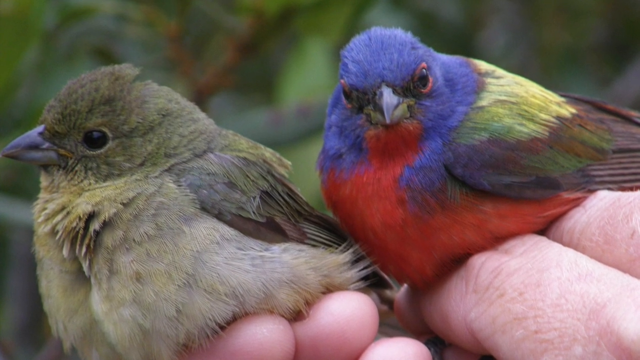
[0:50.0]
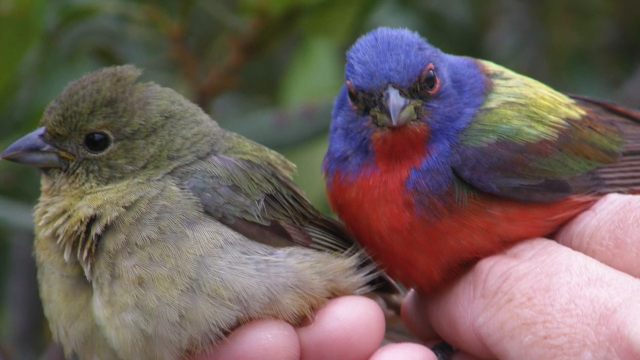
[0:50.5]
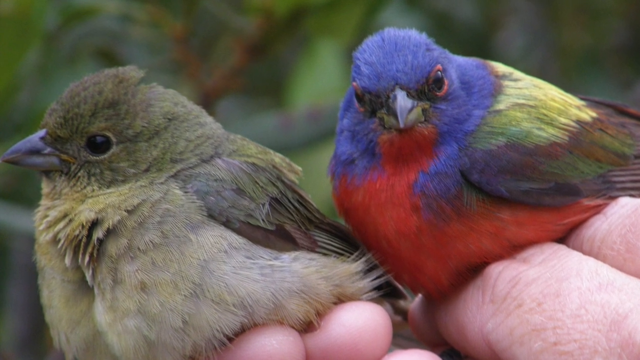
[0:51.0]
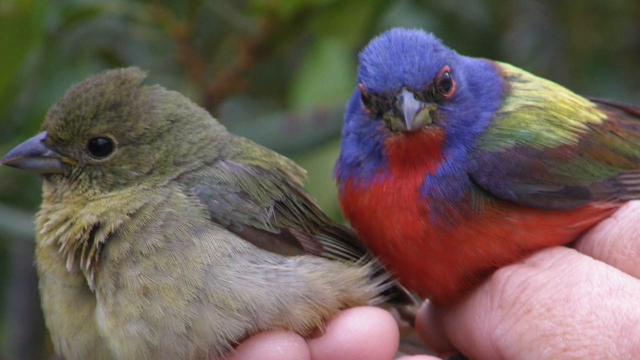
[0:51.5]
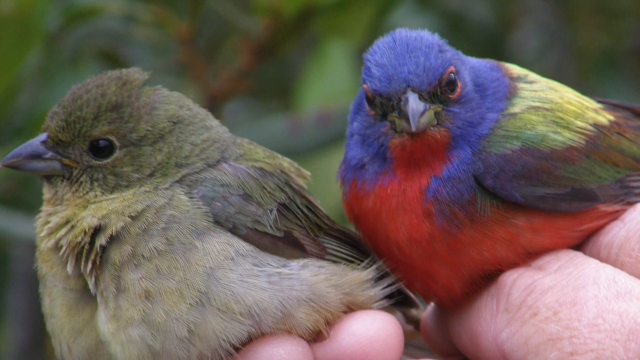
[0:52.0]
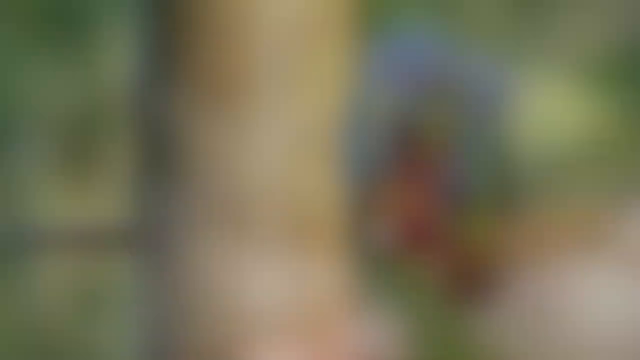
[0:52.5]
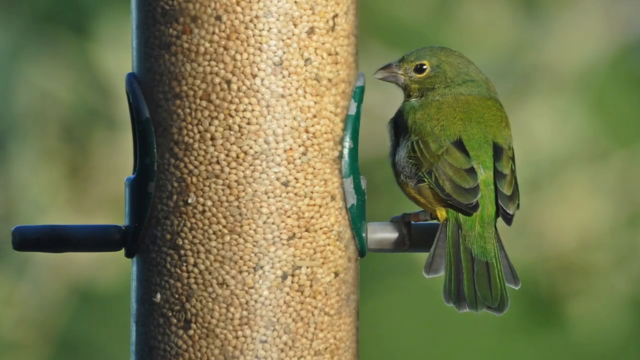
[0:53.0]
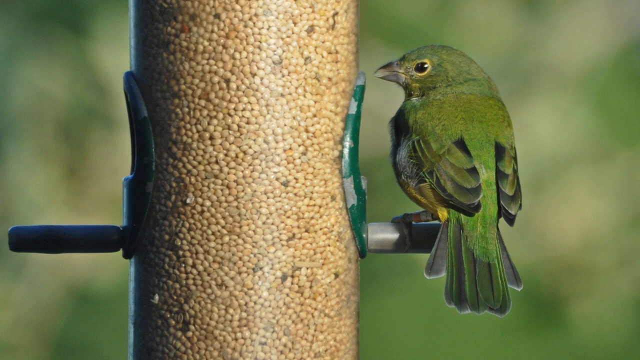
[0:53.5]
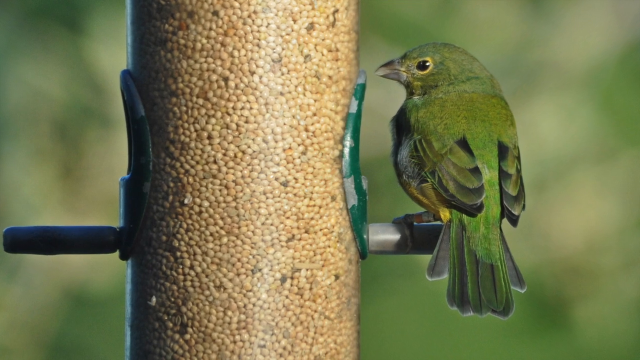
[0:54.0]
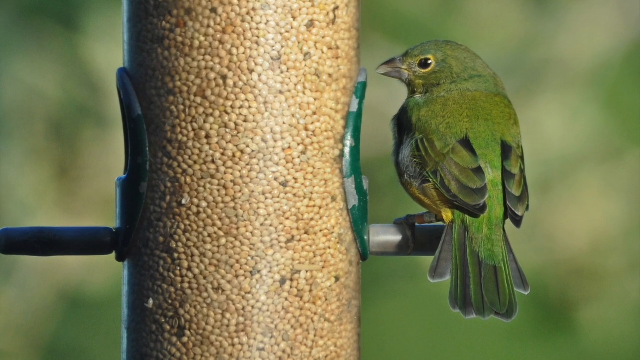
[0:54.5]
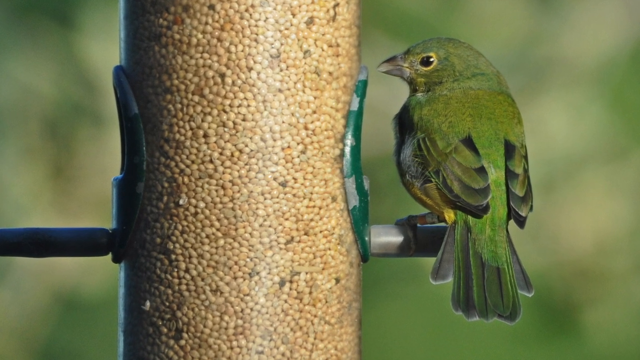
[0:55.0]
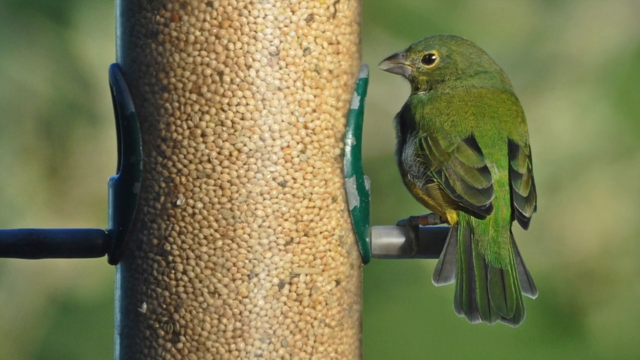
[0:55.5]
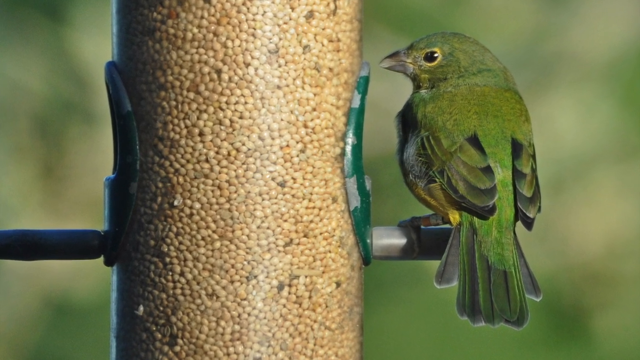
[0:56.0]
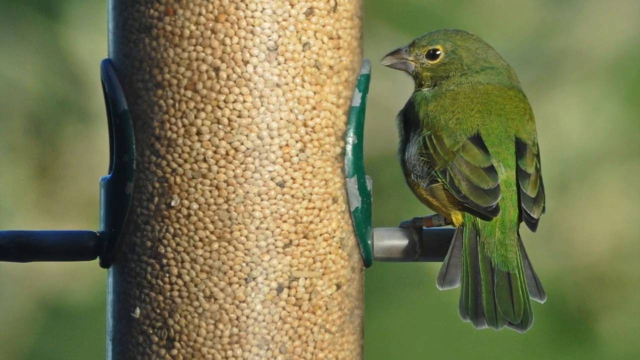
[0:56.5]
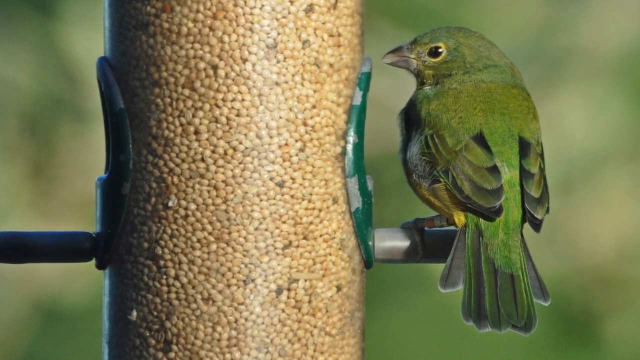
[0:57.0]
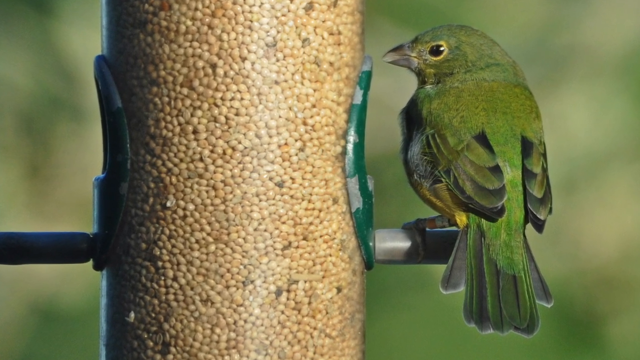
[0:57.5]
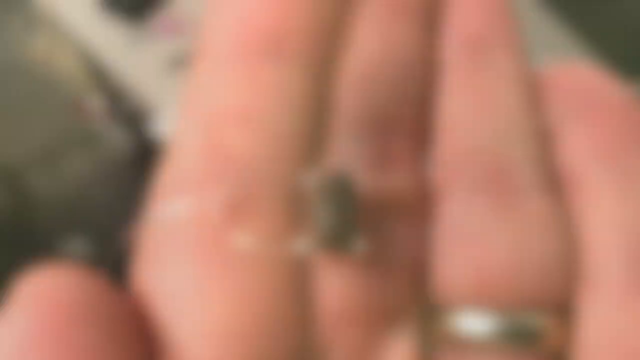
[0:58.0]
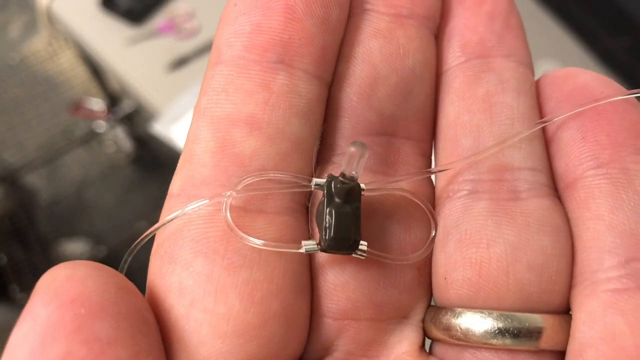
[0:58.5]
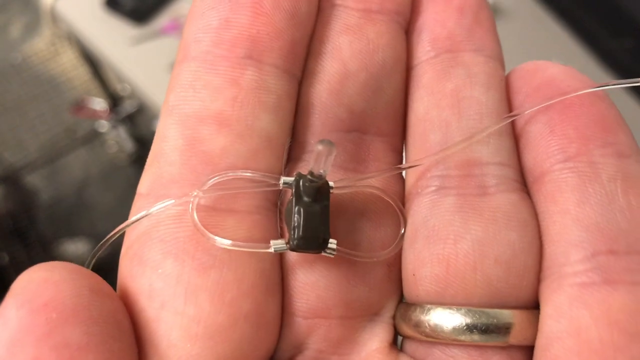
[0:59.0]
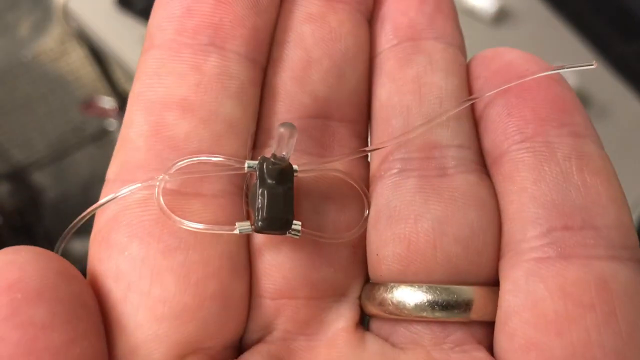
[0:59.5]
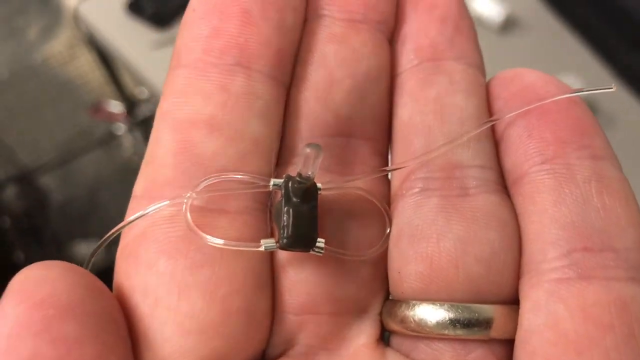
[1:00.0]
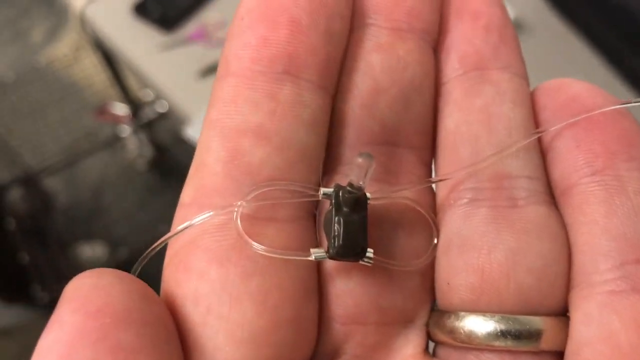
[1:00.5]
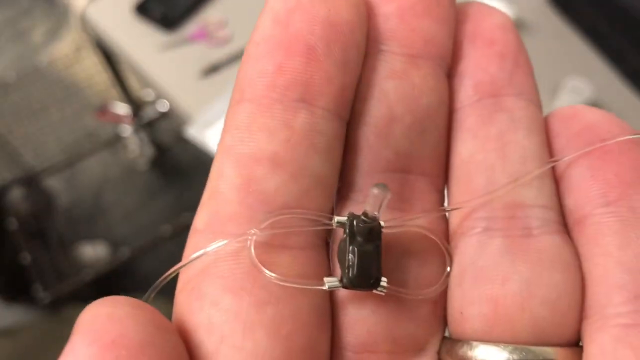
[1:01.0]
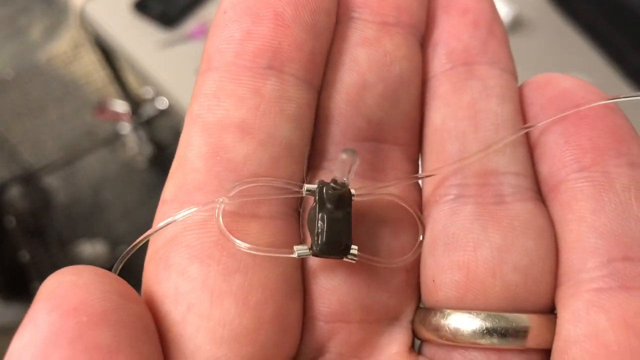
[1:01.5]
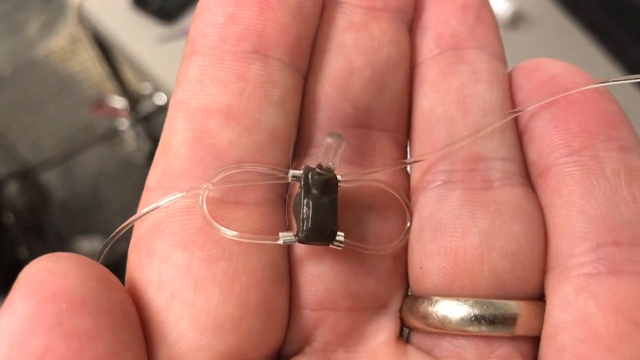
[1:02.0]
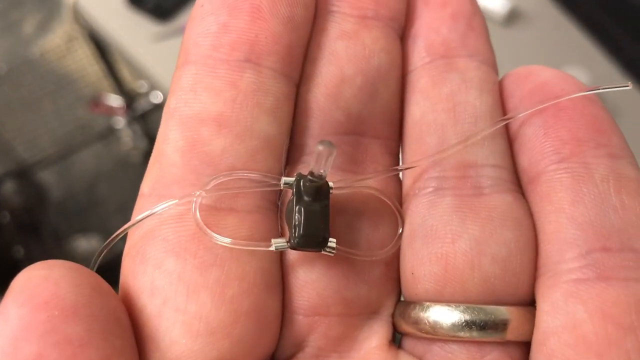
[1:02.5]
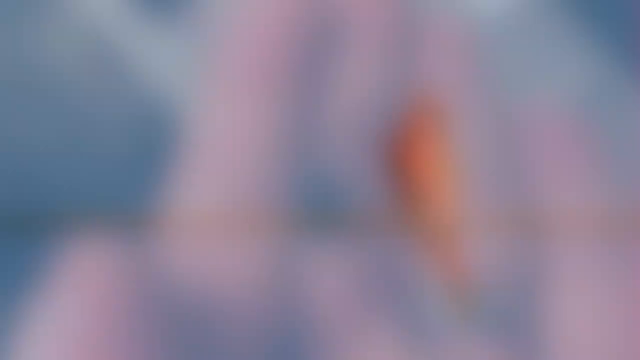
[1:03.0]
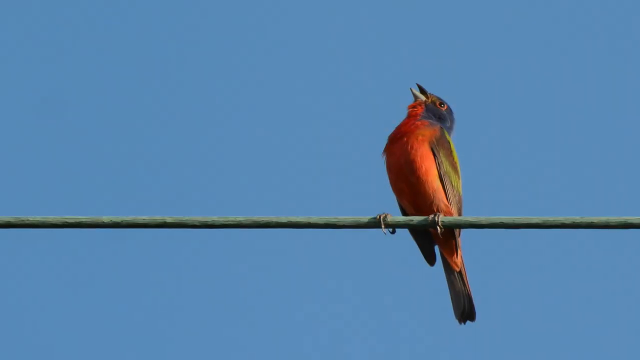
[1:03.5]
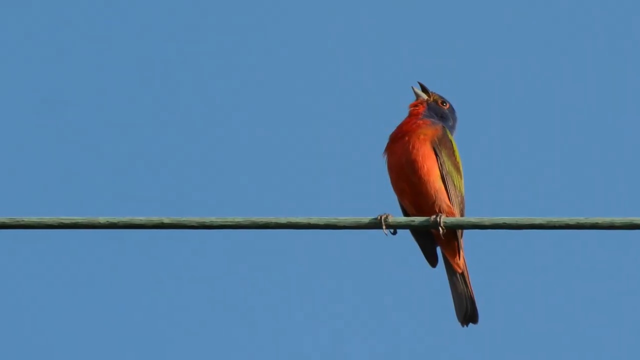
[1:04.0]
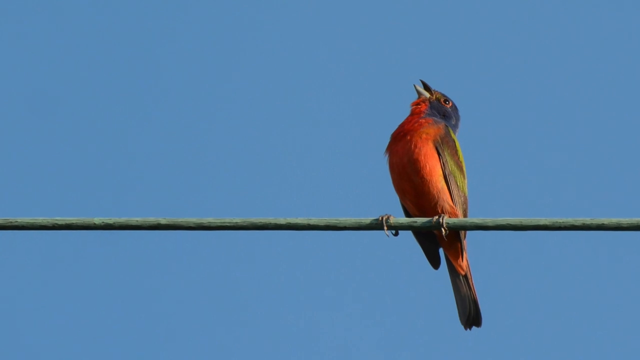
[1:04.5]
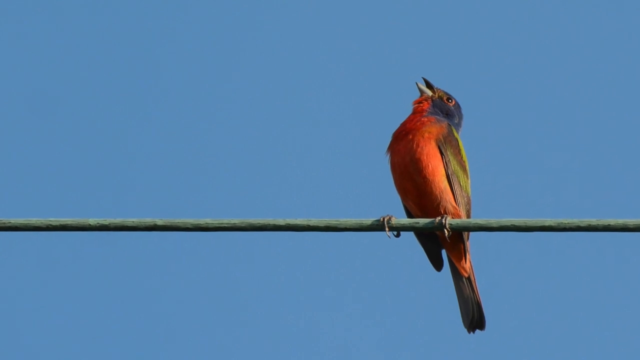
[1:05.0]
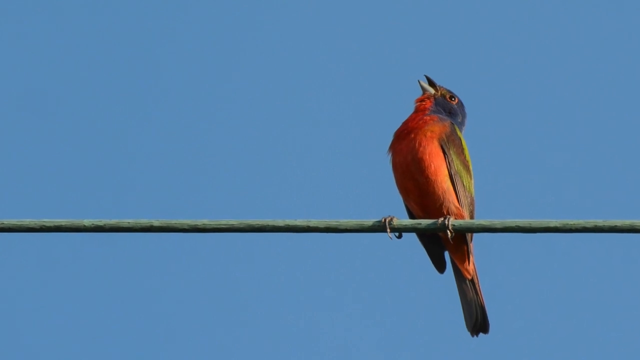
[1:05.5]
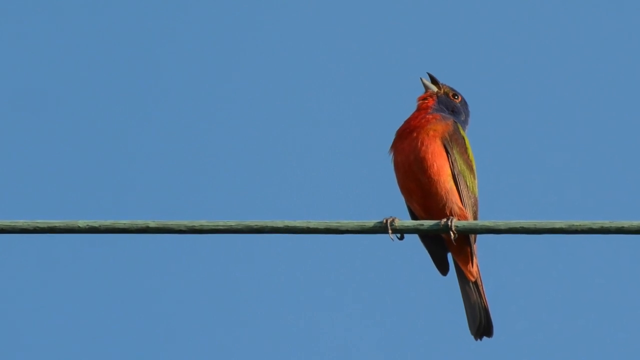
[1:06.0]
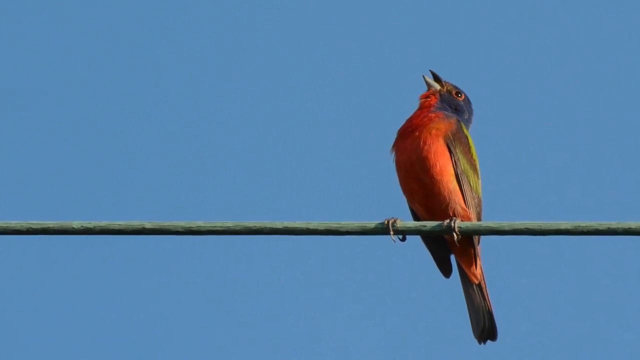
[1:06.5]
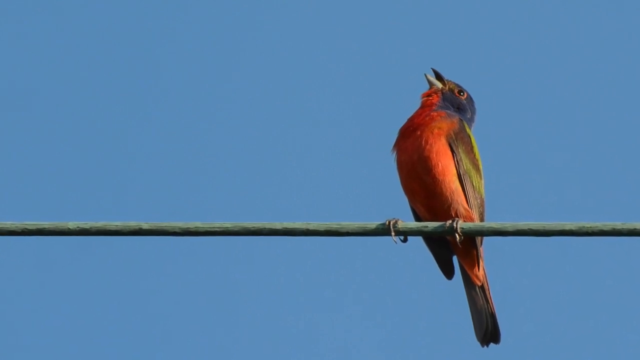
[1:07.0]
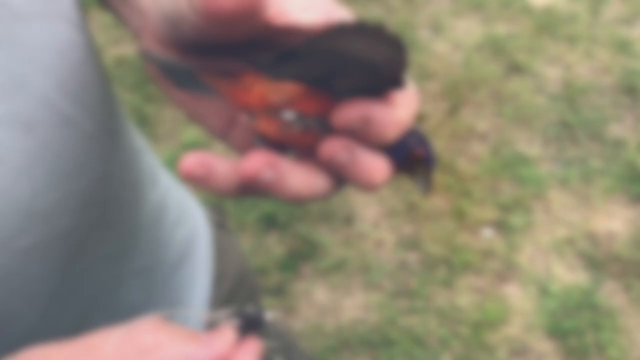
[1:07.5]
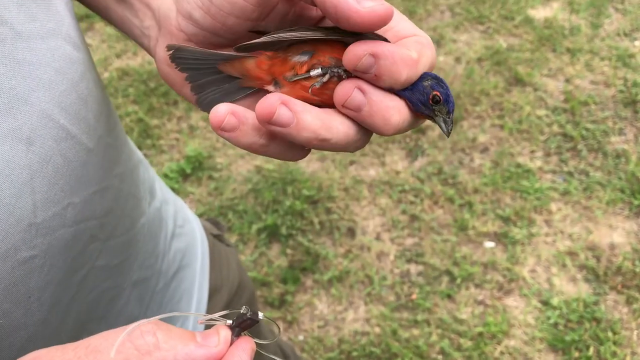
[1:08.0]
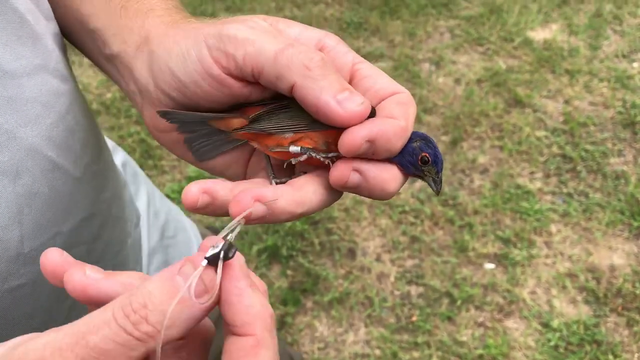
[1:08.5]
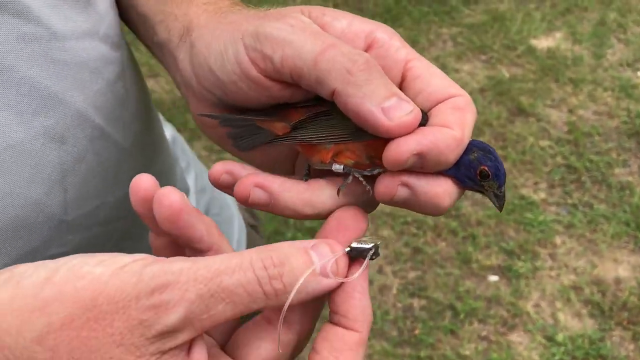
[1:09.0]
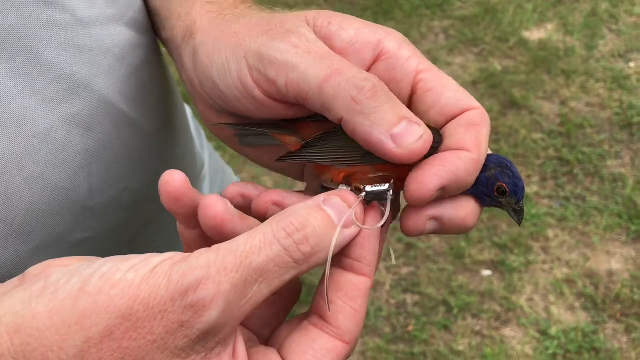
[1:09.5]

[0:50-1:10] A man holds two small birds, one on each hand. On the right is the blue-headed bird with the red-feathered breast and yellowy-green, red and blue wings; on the left is the grey-green bird. Both birds seem quite puffed out and fluffy. The camera zooms in a little more closely, and then the image changes to the bird seed feeder with a green bird sitting on it; it has a large beady eye and a grey beak. The seeds in the feeder are small yellow-cream seeds. Next is a close-up of someone's hand holding a plastic item that looks like two loops of clear plastic with a black section in the middle, each loop with a plastic wire on either side. The hand moves a little. Then a bird sits on a wire, looking up to the sky with its beak open. It has an orange breast, green wings and a blue head. This bird is then in the hands of the man with the plastic looped attachment.